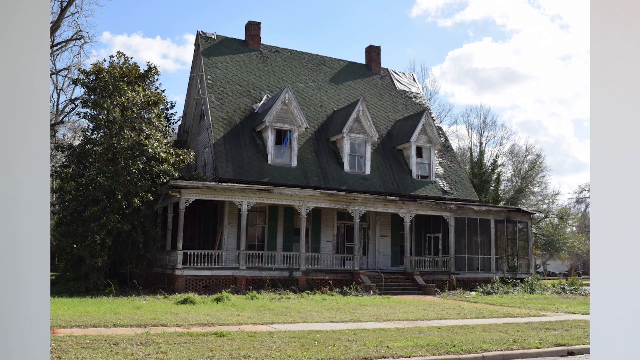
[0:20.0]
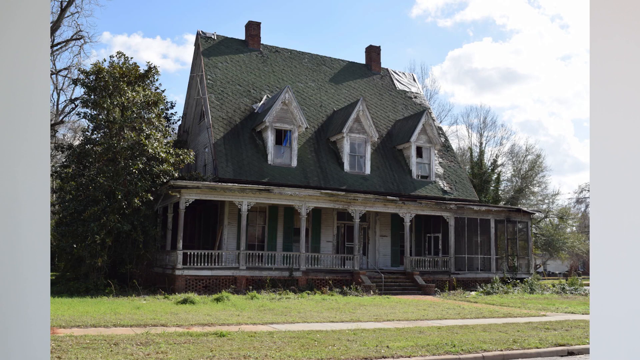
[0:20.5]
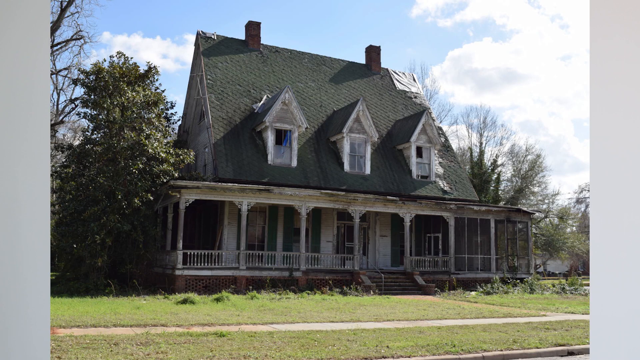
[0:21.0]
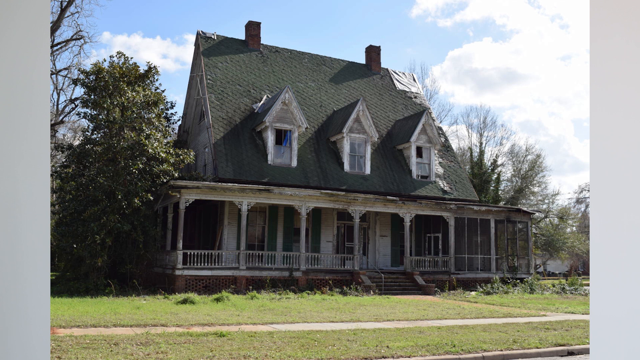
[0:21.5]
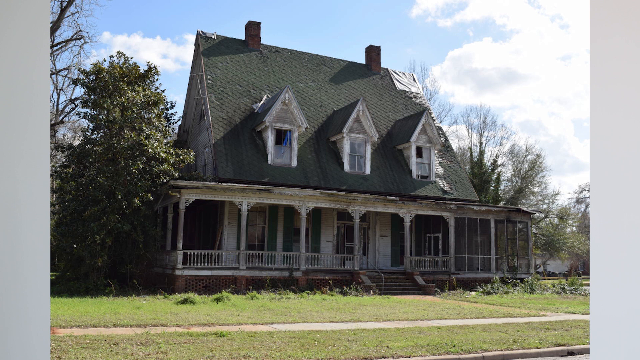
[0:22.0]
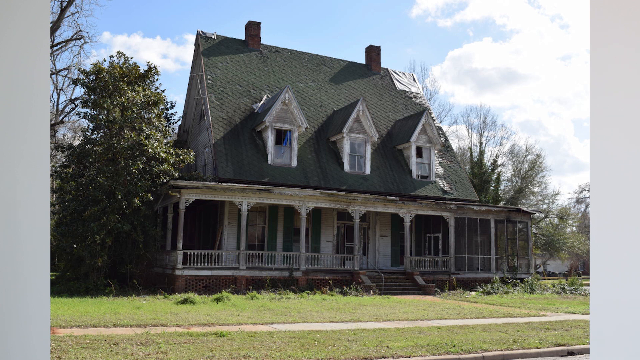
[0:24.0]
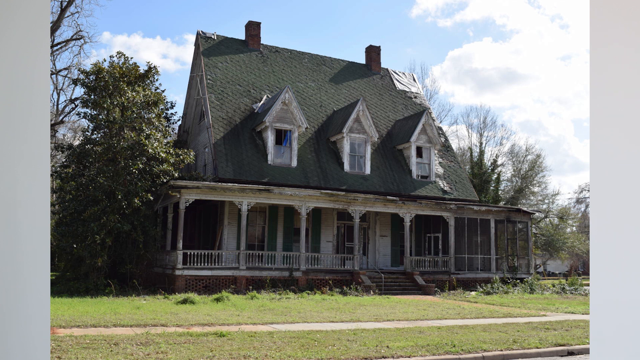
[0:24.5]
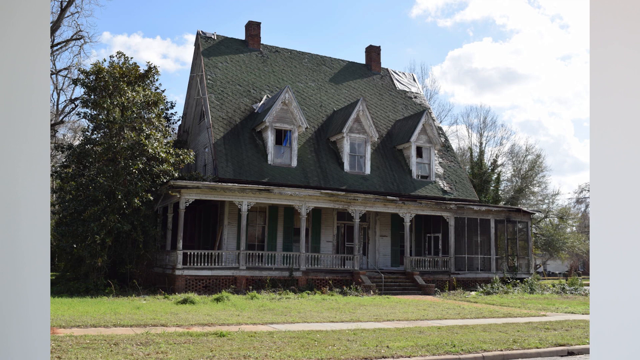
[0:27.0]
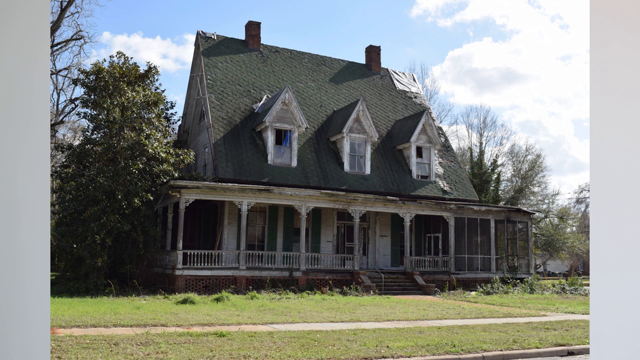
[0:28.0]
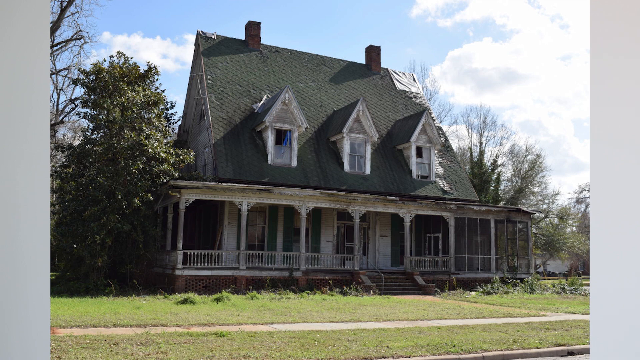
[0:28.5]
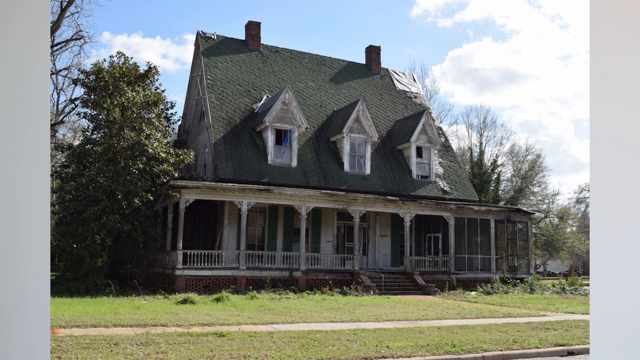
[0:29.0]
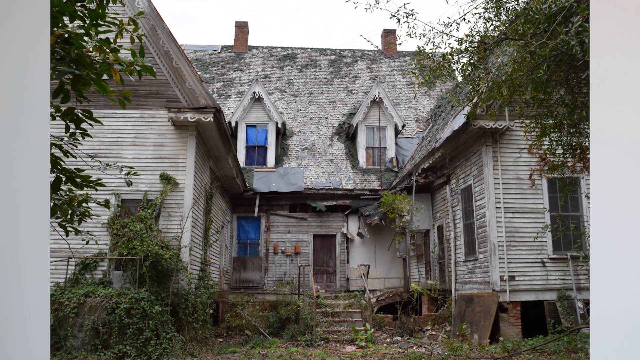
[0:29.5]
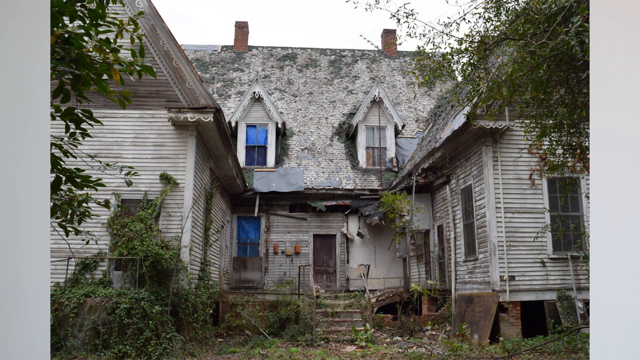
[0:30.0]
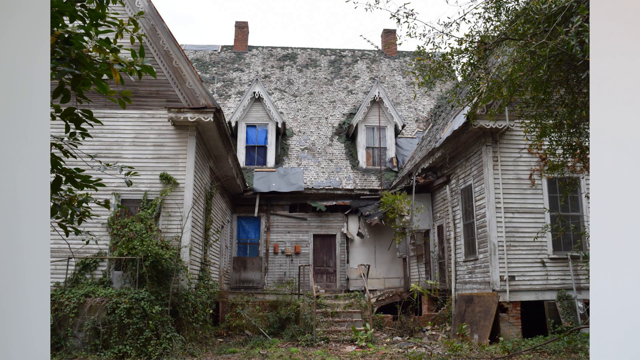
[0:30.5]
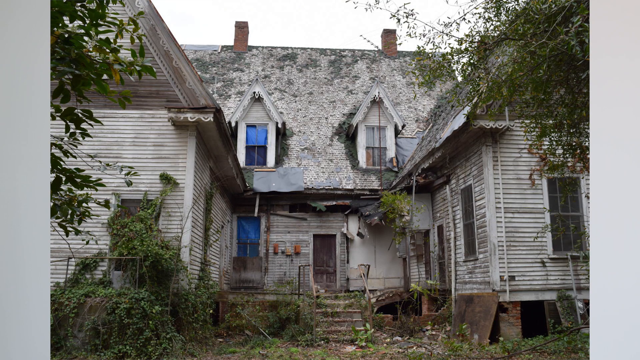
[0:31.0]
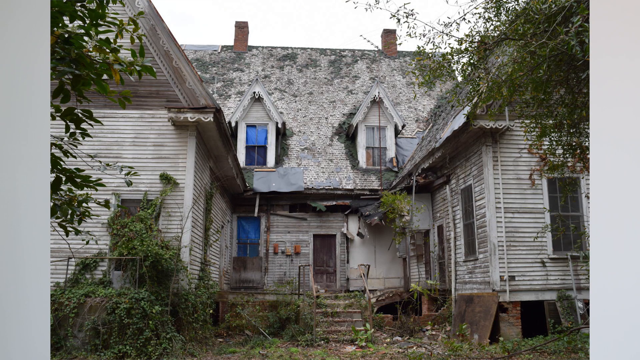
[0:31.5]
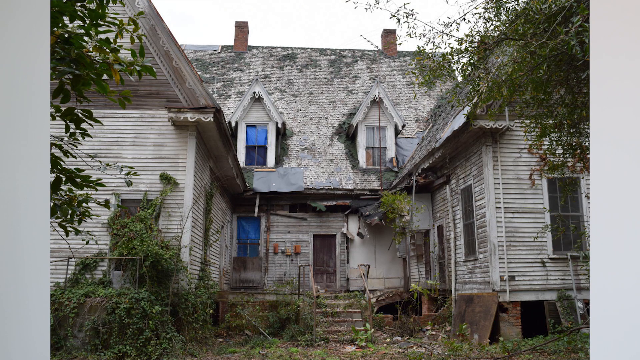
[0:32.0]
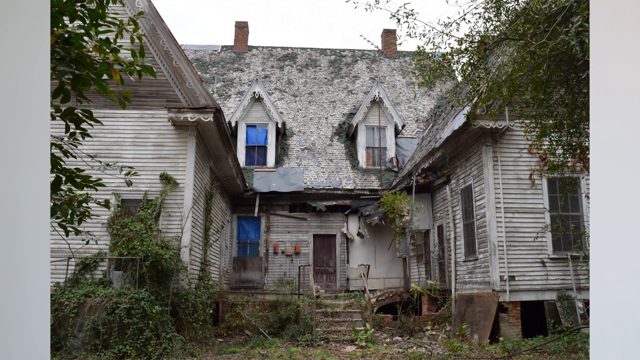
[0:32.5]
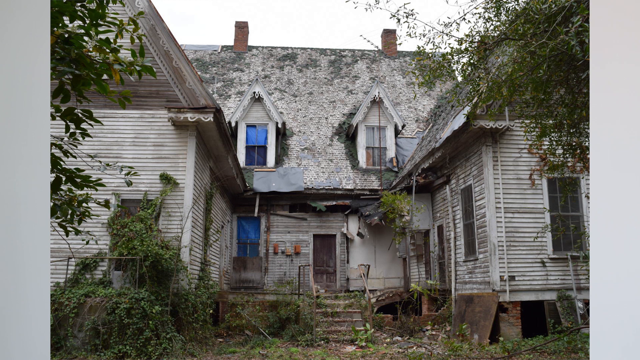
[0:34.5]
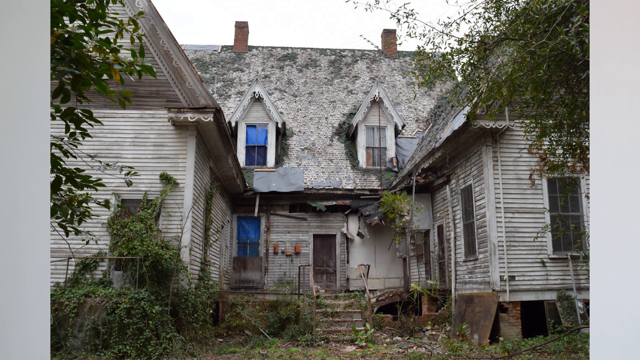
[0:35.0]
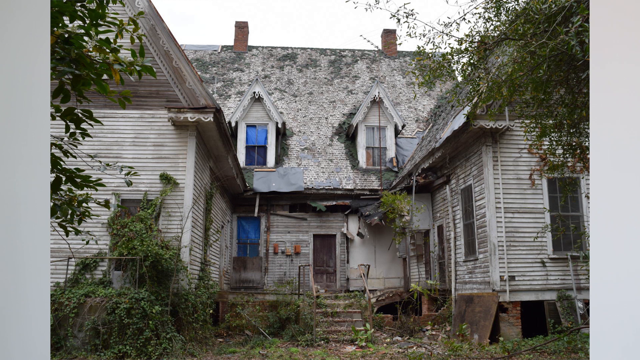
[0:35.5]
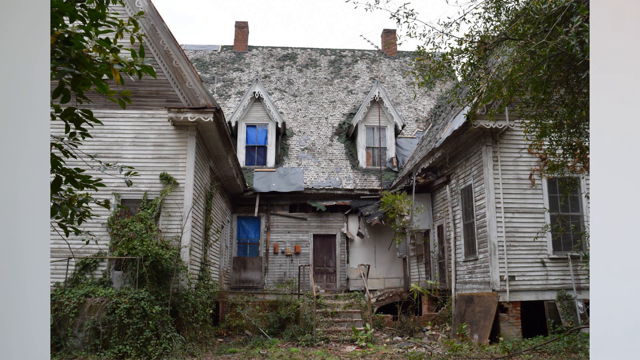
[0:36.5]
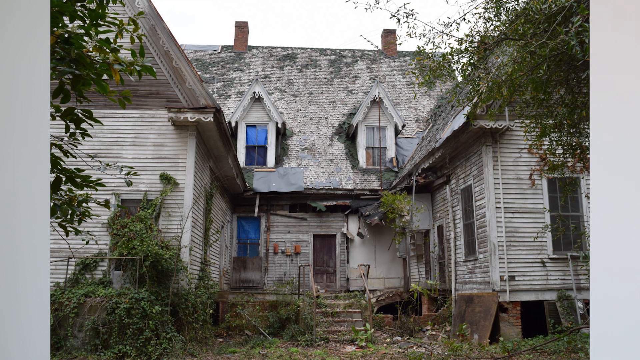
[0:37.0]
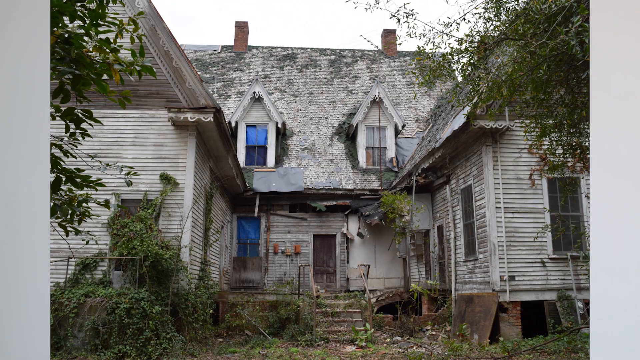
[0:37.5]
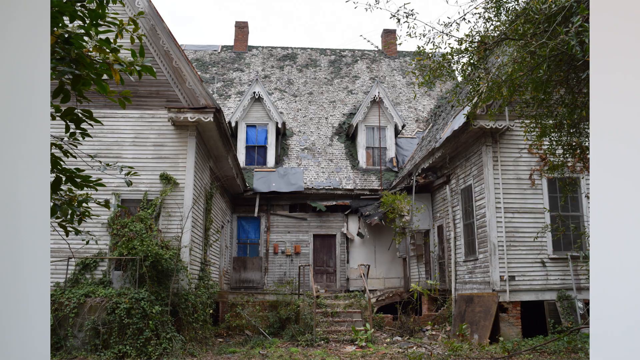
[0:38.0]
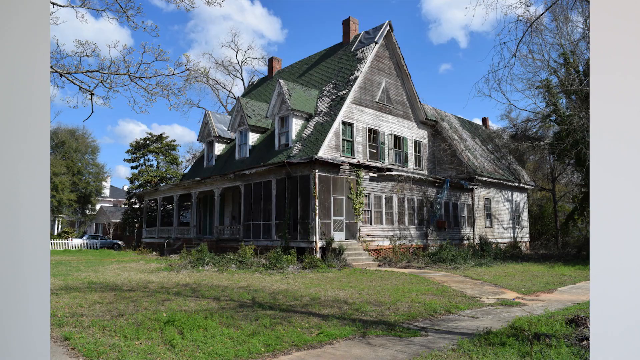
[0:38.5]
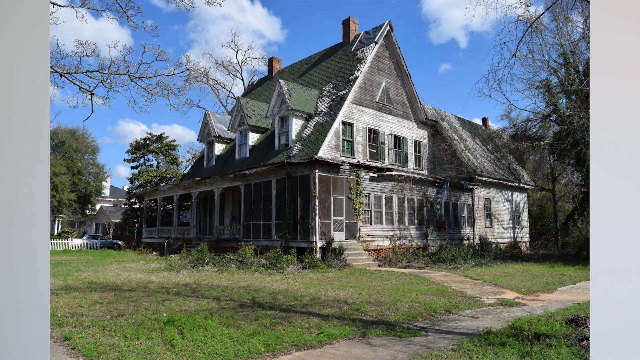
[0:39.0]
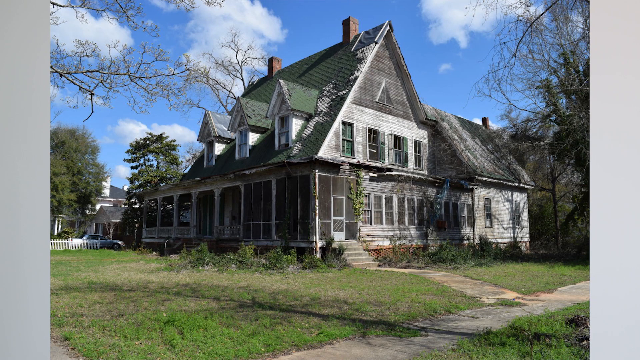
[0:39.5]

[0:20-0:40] A photo shows a large house with a dark black triangular roof. On the front side there are three windows, each with its own small triangular roof. Beneath them is a very long front porch spanning the whole length of the house, with a few stairs leading down to a sidewalk. The right side of the porch appears glassed in, with just a seating area. The house looks a bit worn down: some of the dark black roofing seems to be fading to a lighter gray, there appears to be a white tarp over the right corner of the roof, and the white paint on the porch pillars looks like it is fading. Next comes what looks to be the back of the house, where the roof is in even worse condition, almost completely gray with the black faded off, and grassy green moss grows on parts of it. The house appears to have two large sections, and in the center it indents a bit where the door of the back entrance is visible. There appear to be lots of overgrown bushes and tree leaves covering the house a bit. Then the side of the house appears, with lots of windows on the first and second stories and a small triangular window on what looks to be the attic area. Most of the house is white, though a faded grayish paint color, and the top is a brown wooden material with a triangular roof.